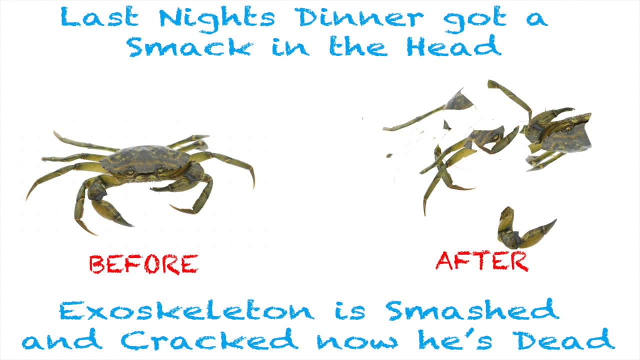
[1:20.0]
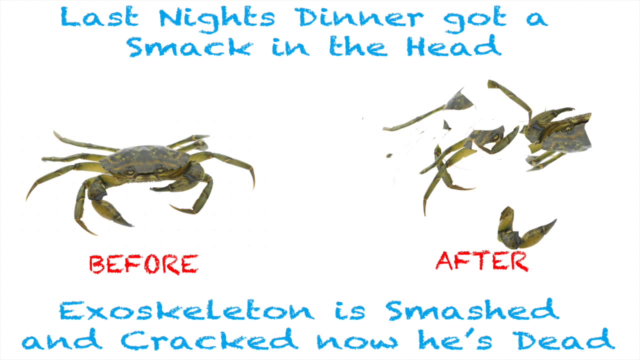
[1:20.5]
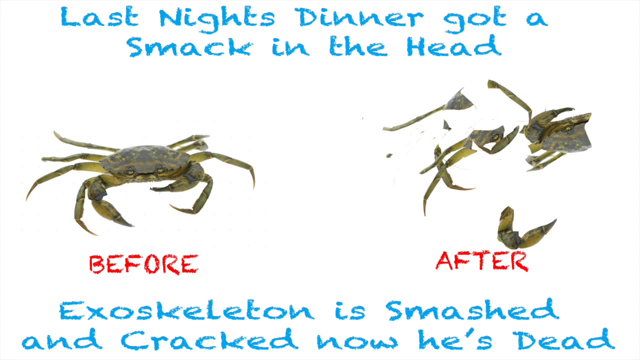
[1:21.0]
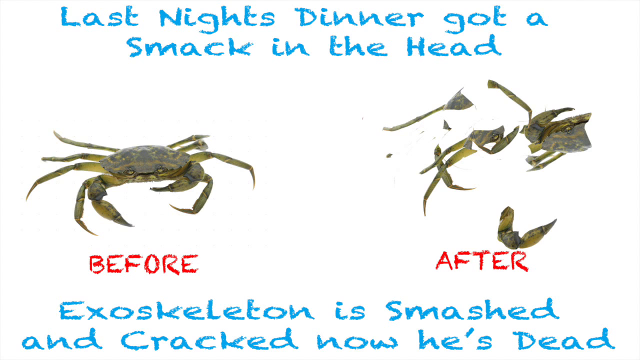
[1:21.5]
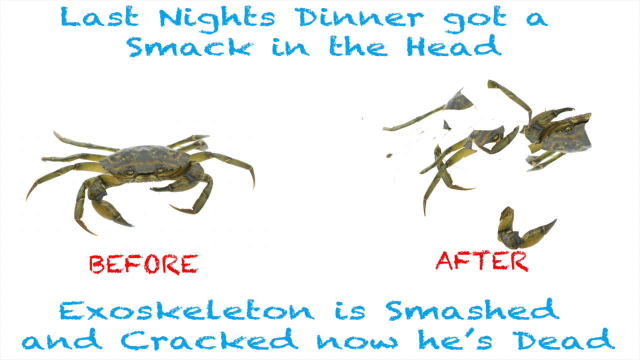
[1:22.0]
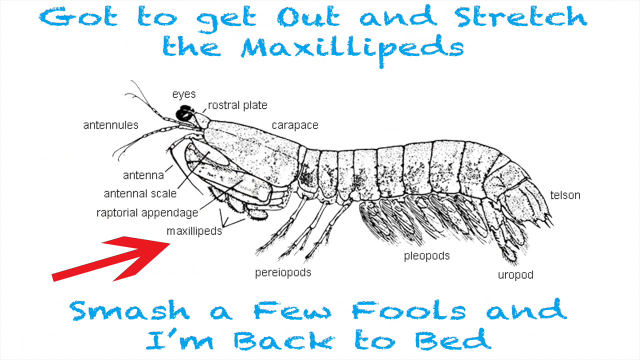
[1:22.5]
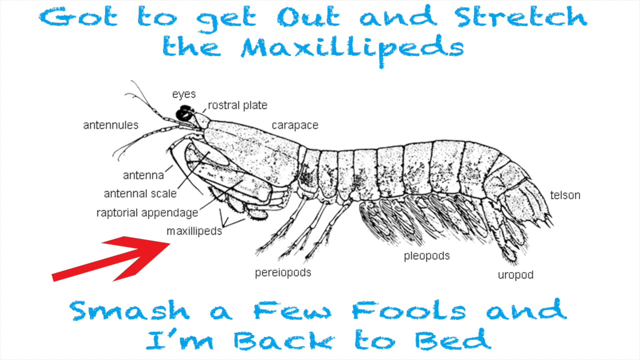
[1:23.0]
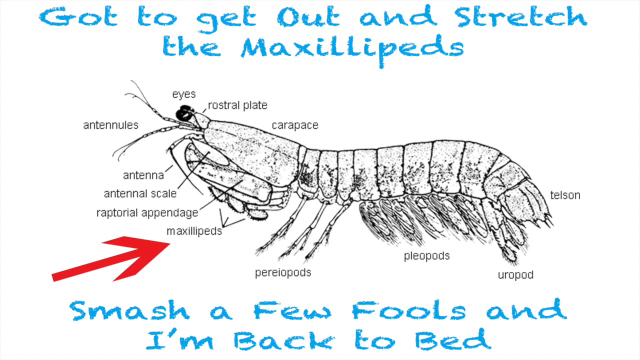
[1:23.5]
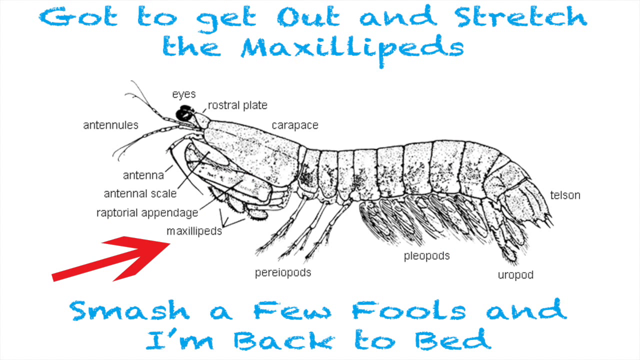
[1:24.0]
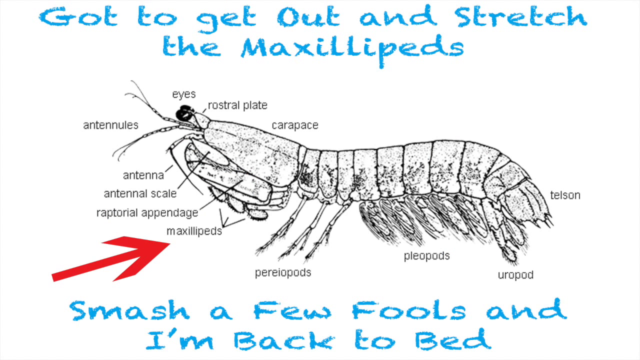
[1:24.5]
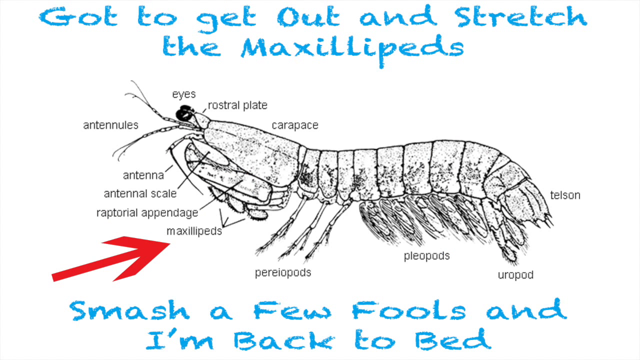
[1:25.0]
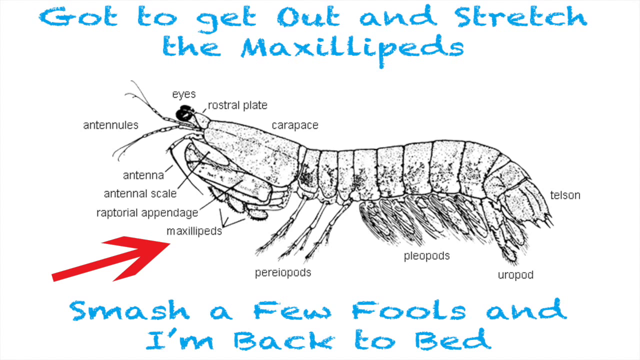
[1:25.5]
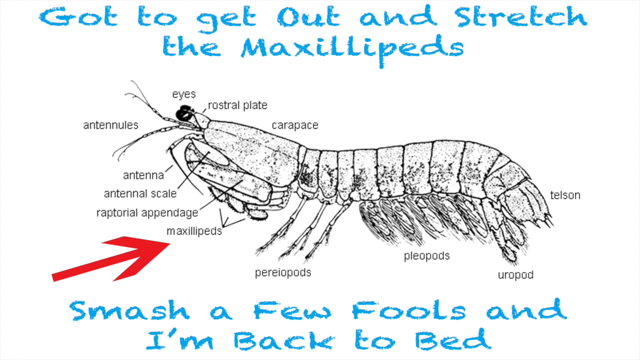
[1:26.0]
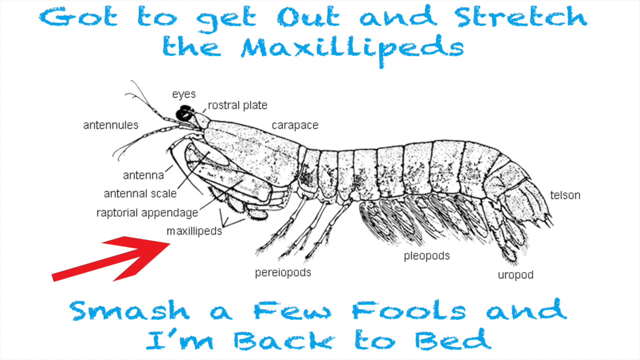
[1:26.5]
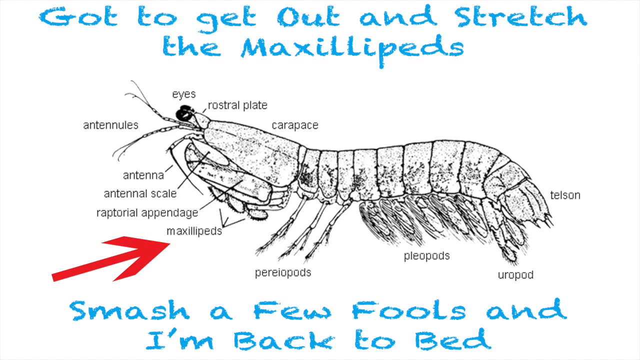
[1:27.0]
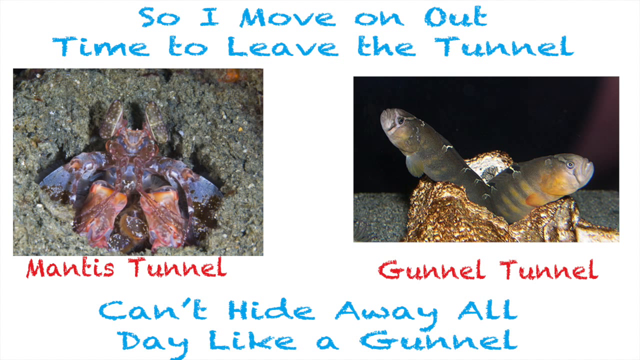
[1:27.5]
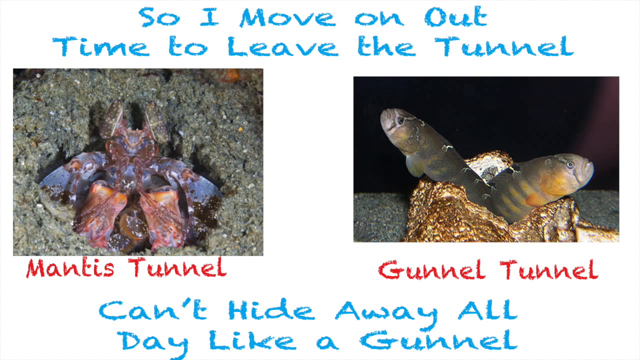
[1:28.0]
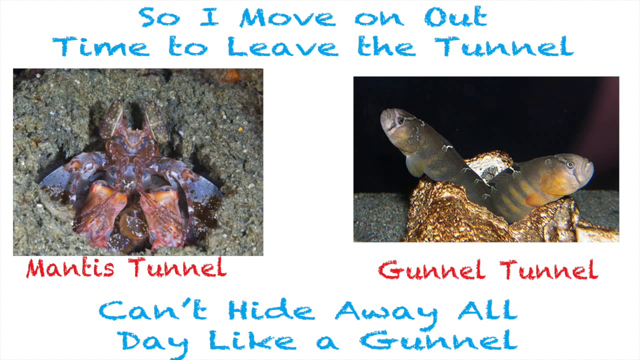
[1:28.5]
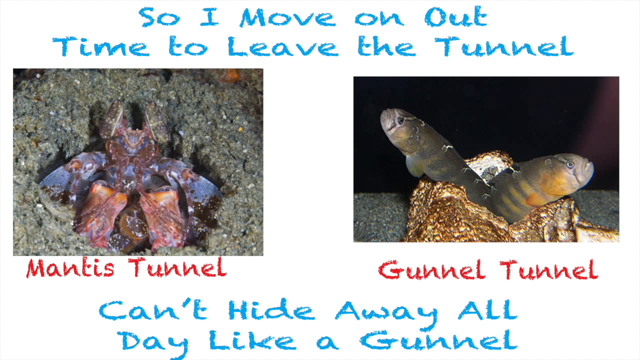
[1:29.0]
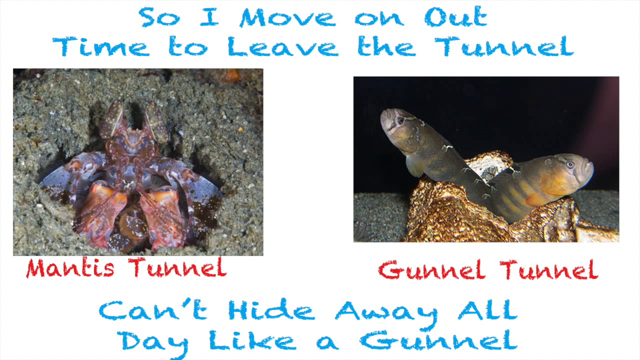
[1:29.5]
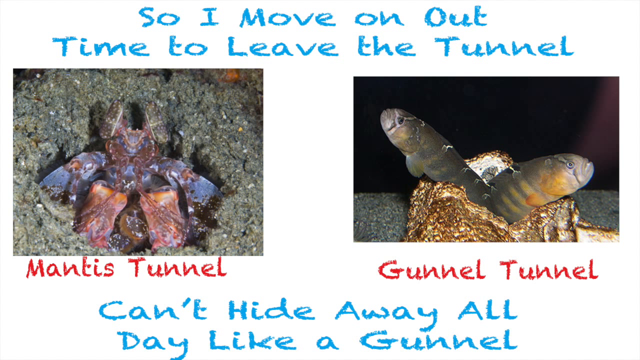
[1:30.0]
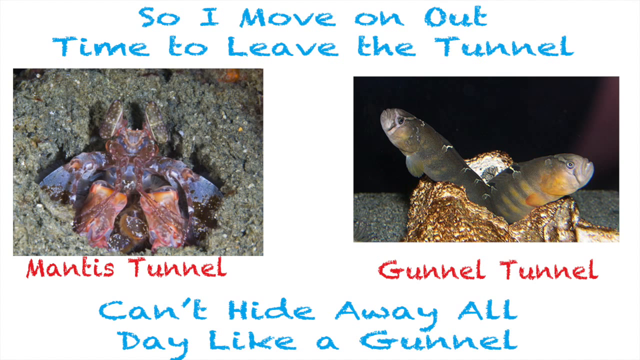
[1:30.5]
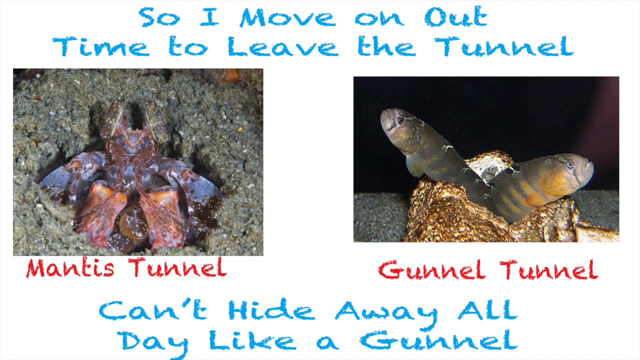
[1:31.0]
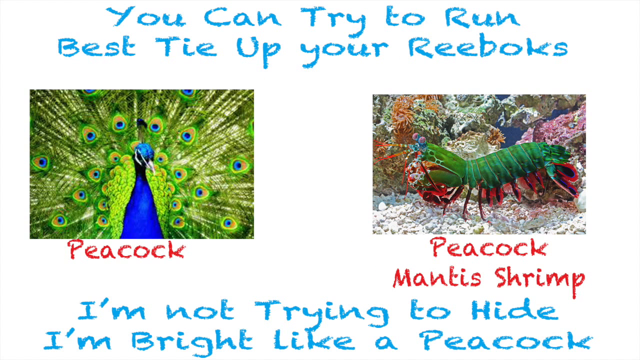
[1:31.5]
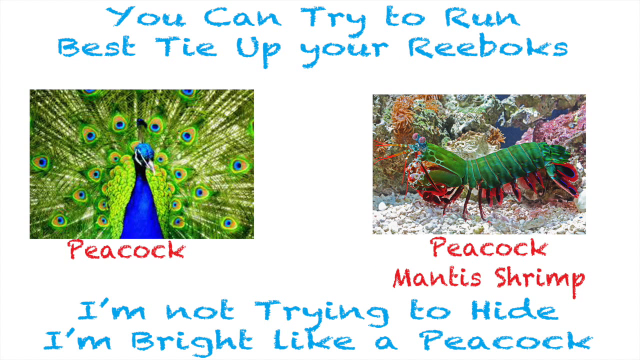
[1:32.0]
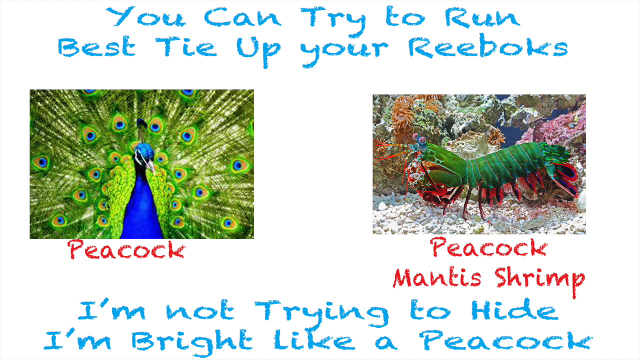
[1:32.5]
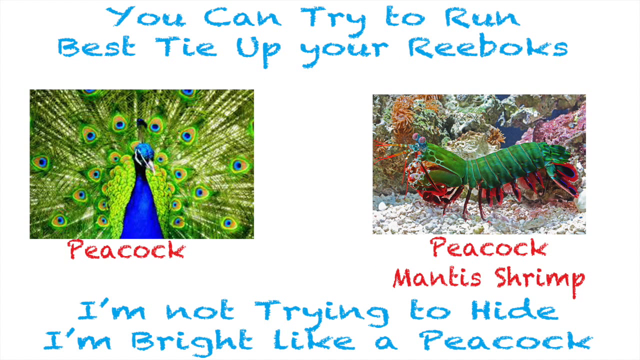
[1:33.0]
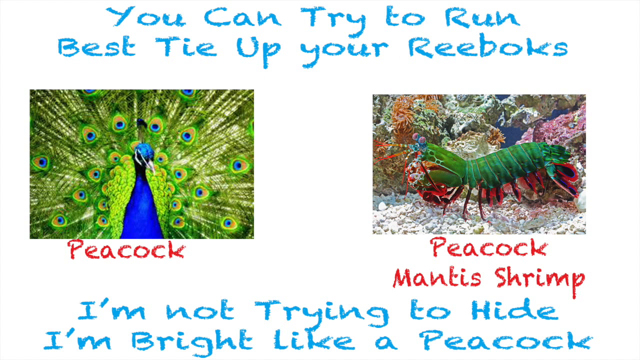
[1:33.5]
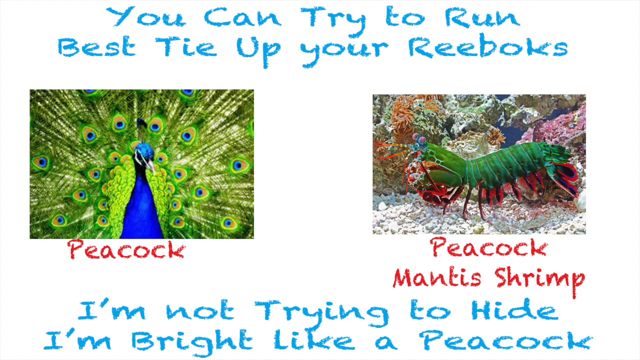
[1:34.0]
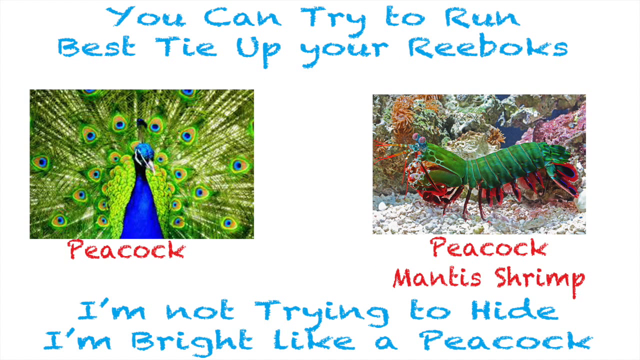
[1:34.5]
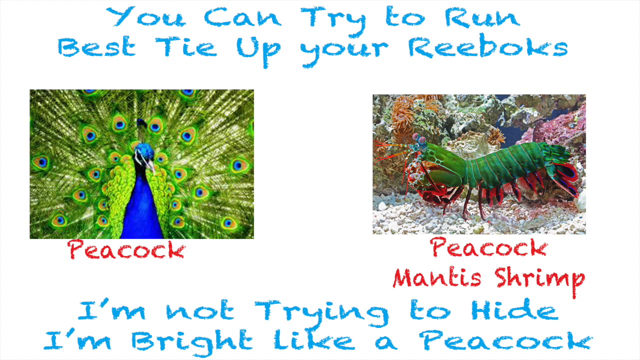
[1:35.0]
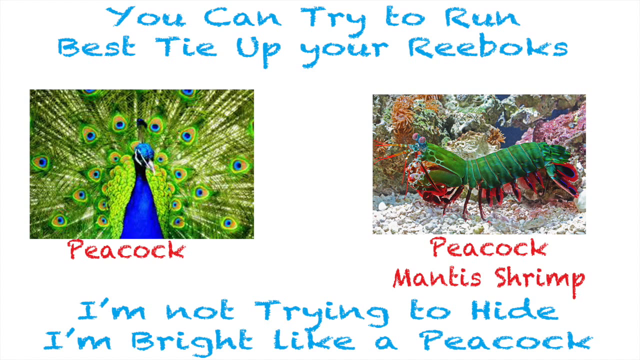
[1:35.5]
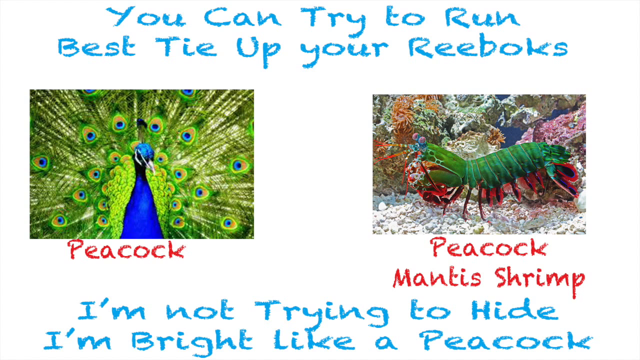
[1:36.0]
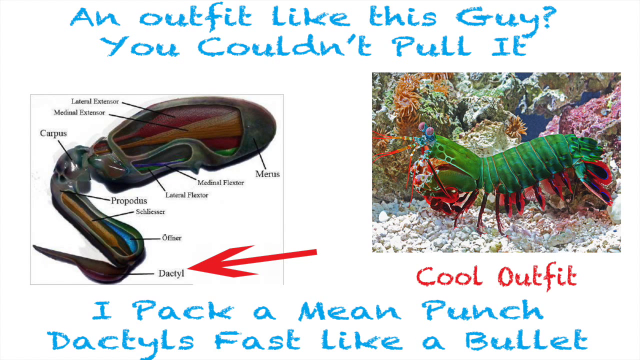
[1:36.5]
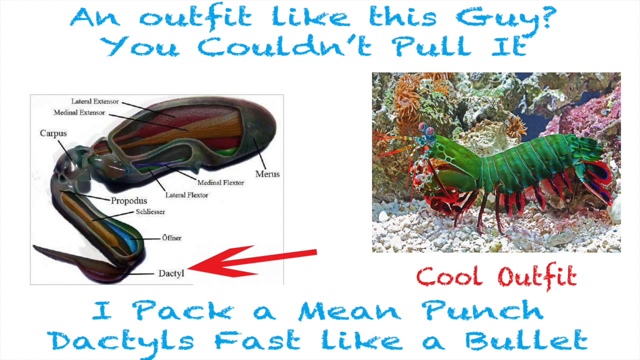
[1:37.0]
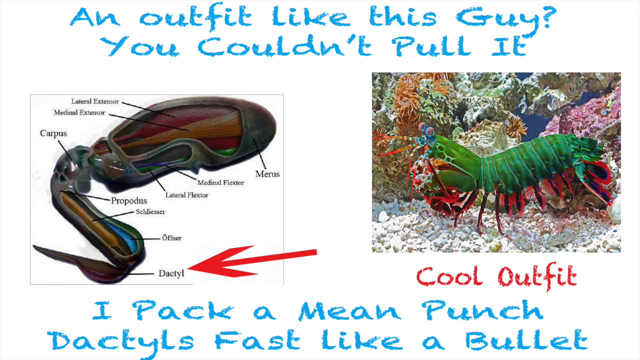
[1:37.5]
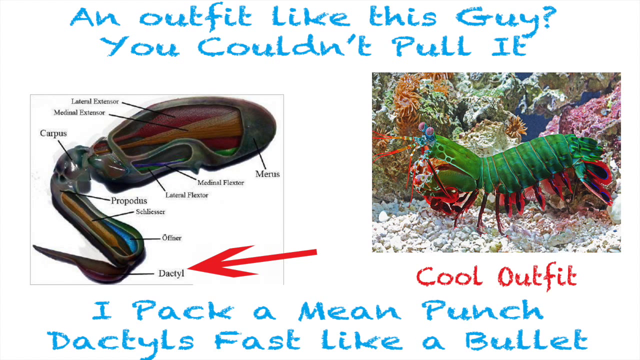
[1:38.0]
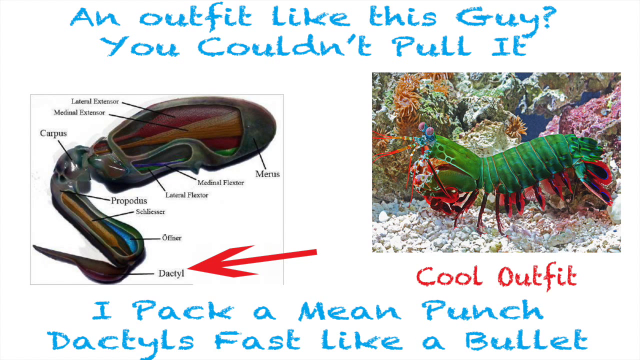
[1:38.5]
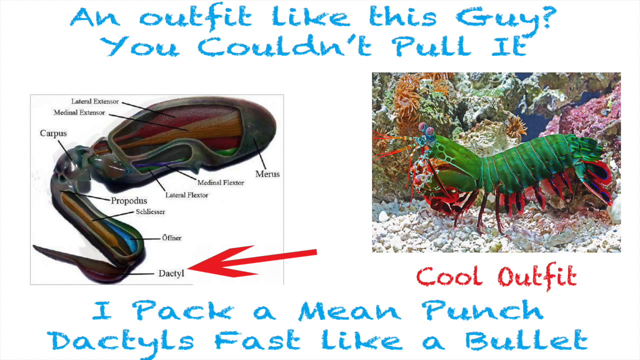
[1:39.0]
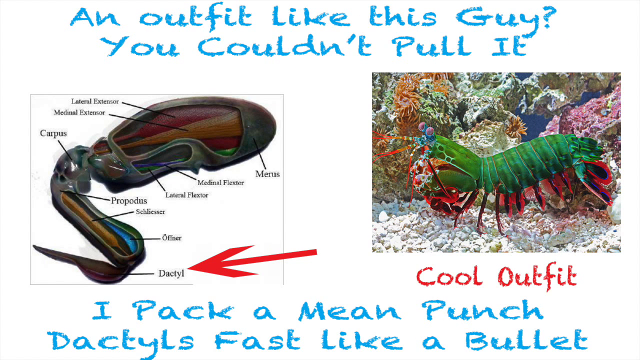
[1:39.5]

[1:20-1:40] An image carries the text "last night's dinner got a smack in the head." Two crab images follow, labelled before and after: in the before picture the crab is in one piece, and in the after picture it is in many different pieces, as if it has been smashed or smacked. The text below reads "exoskeleton is smashed". Another image has "got to get out and scratch the maxillipeds" on top and shows the maxillipeds with their different parts labelled with names; the text below reads "smash a few fools and I'm back to bed." The next image has two pictures, one for Mantis Tunnel and one for Gunnel Tunnel, with text above that includes "time to leave the tunnel" and text below reading "can't hide away all day like a gunnel." Then two pictures show a peacock and a peacock mantis shrimp, with "you can try to run, best tie up your Reeboks" above and "I'm not trying to hide, I'm bright like a peacock" below. The next image again has two pictures: on the left an unidentified image with its different parts labelled with names, and next to it the peacock shrimp, labelled "cool outfit". The text above includes "you couldn't pull it. I pack a mean punch. Dactyls fast like a bullet."